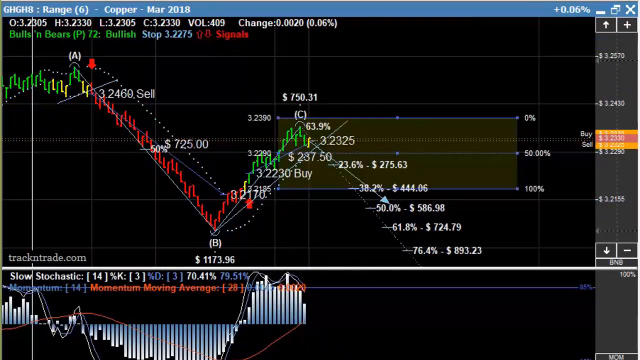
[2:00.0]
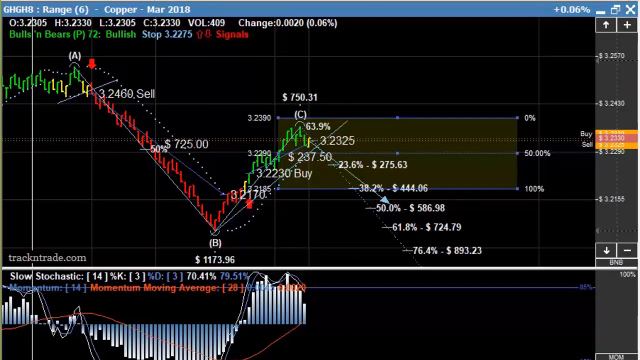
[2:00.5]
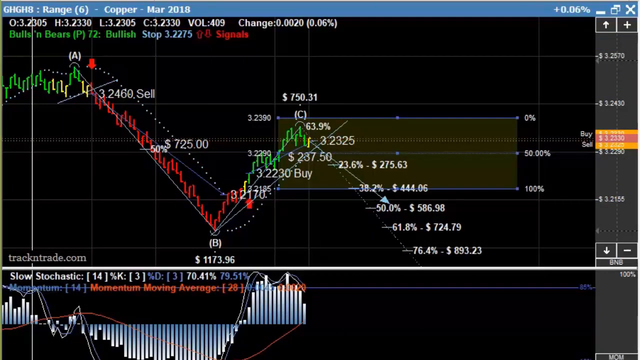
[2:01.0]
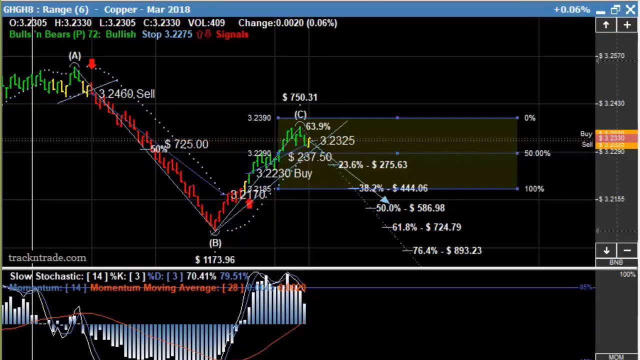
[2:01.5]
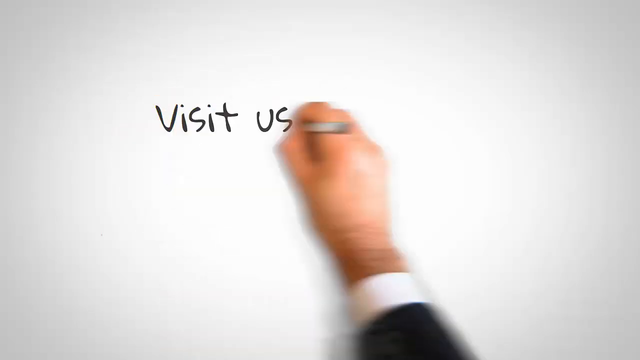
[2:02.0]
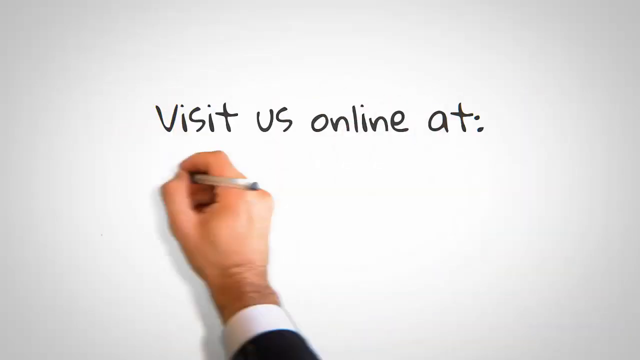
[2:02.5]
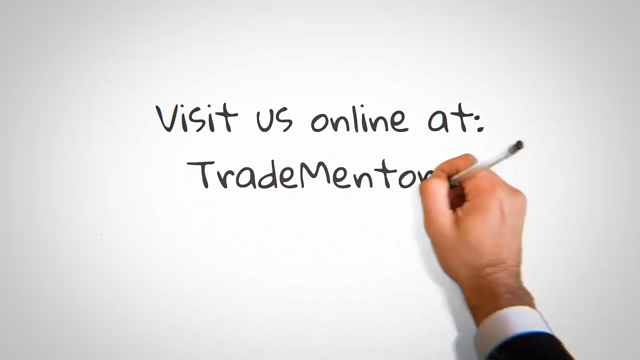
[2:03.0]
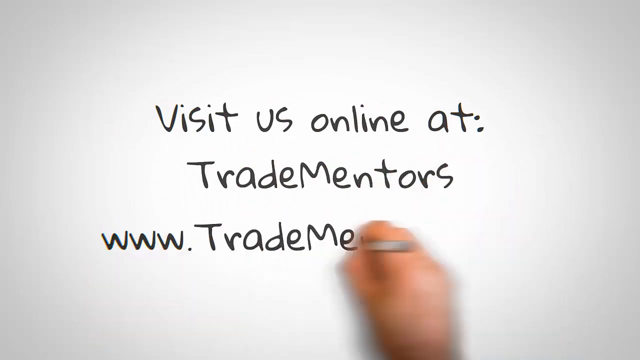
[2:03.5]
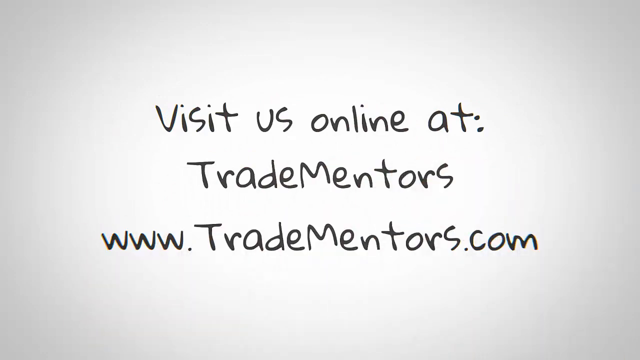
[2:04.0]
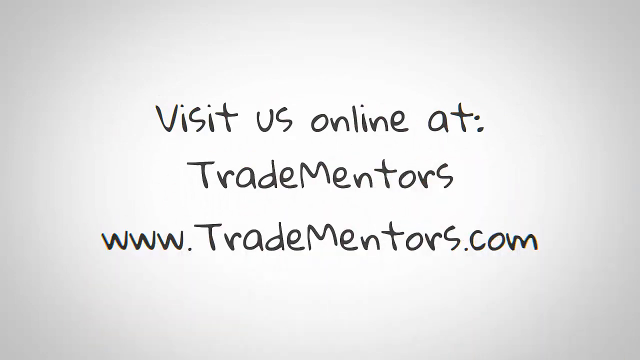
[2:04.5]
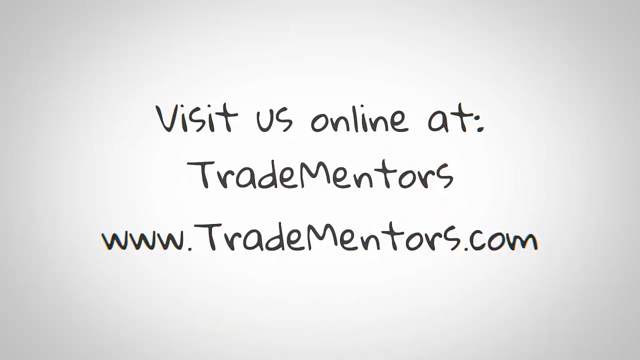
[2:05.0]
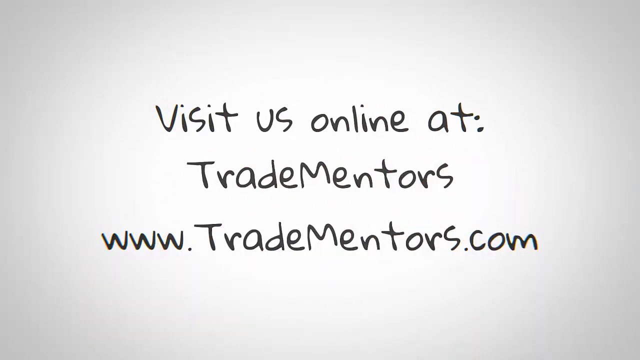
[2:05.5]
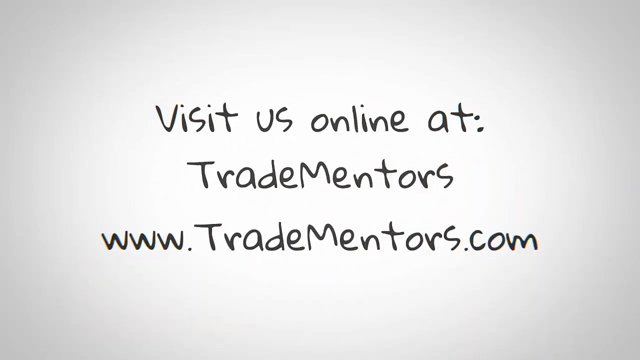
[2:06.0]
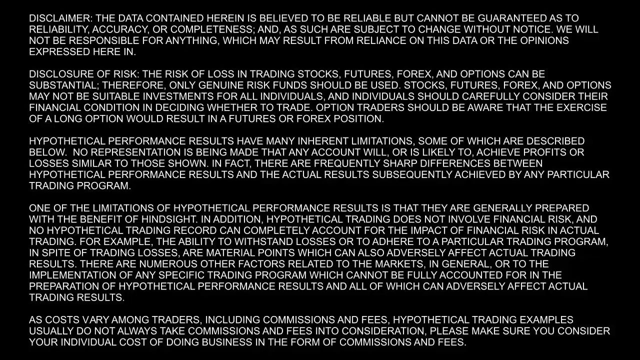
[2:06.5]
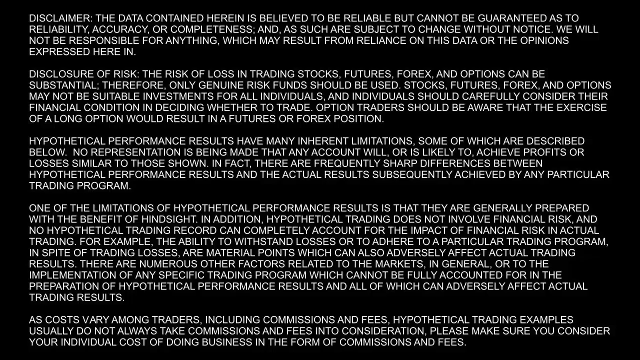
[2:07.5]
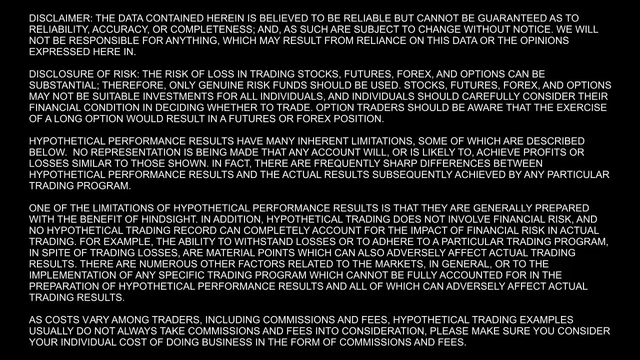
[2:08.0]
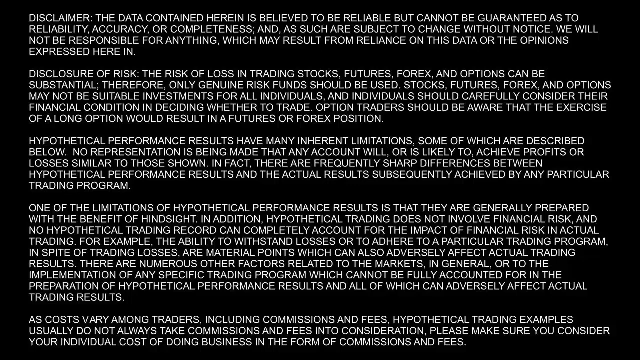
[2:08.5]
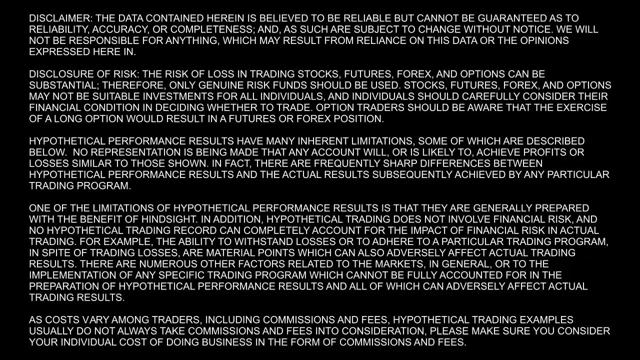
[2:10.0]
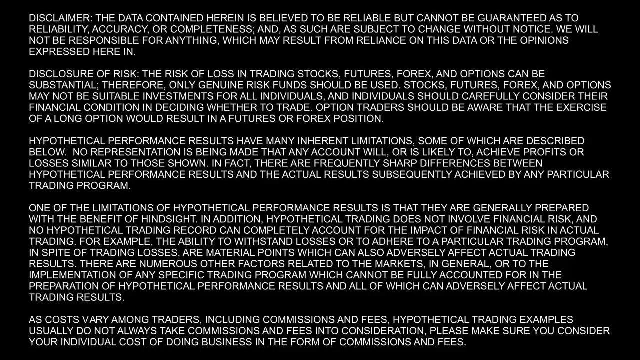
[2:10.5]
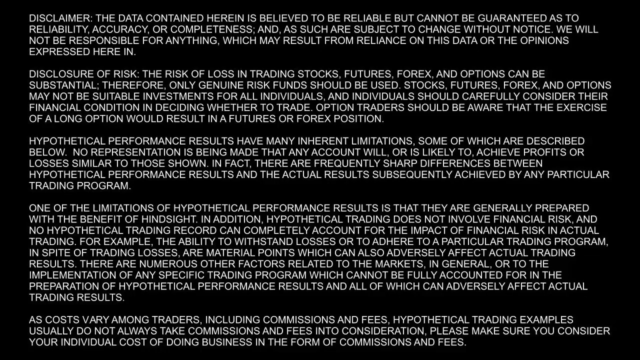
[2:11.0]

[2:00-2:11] The trading graph is on screen, then it abruptly changes to a white background where a hand reaches in. The hand holds a pen and belongs to an arm in a dress shirt and black jacket. The hand writes "visit us online at tradementors, www.tradementors.com". The screen then abruptly changes to a disclaimer in white, all-caps text on a black background. It begins "disclaimer, the data contained herein is believed to be reliable, but cannot be guaranteed as to reliability, accuracy, or completeness, and as such are subject to change without notice. We will not be responsible for anything which may result from reliance on this data or the opinions expressed herein." The next paragraph reads "disclosure of risk. The risk of loss in trading stocks, futures, forex, and options can be substantial. Therefore, only genuine risk funds should be used. Stocks, futures, forex, and options may not be suitable investments for all individuals." The disclaimer text continues at length.